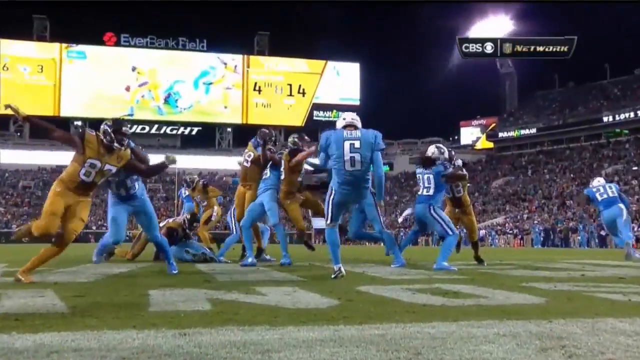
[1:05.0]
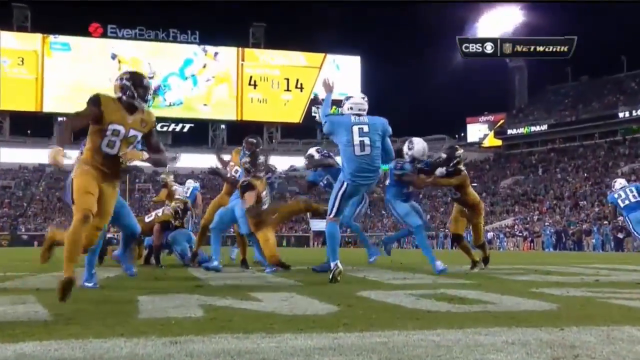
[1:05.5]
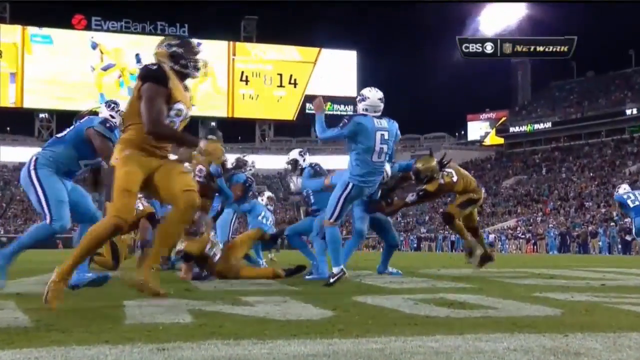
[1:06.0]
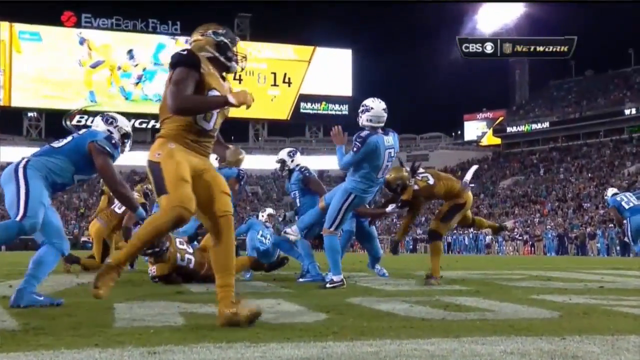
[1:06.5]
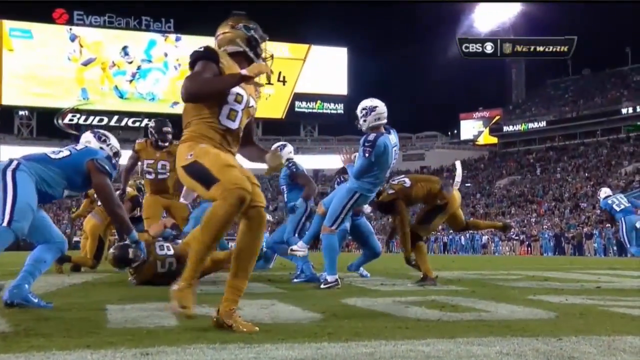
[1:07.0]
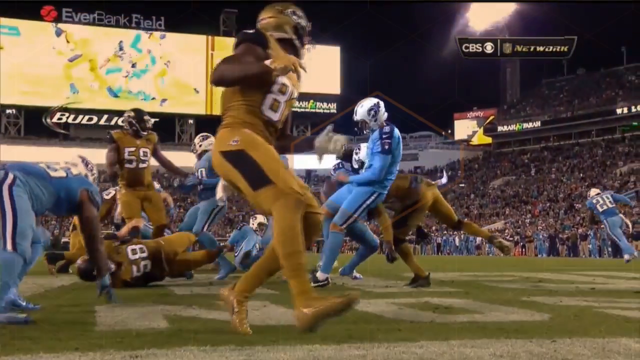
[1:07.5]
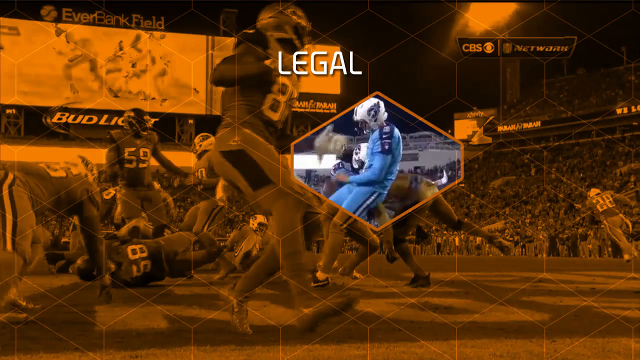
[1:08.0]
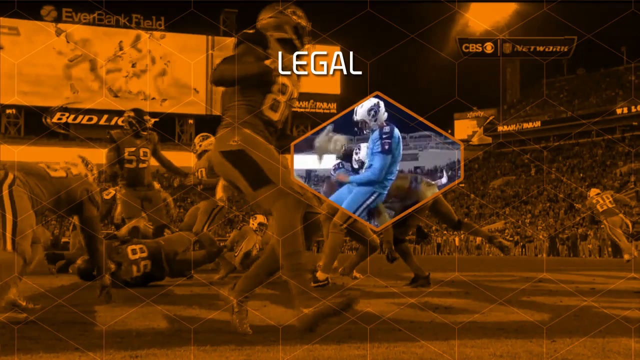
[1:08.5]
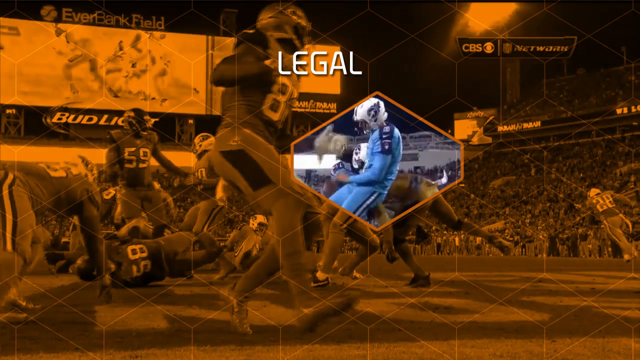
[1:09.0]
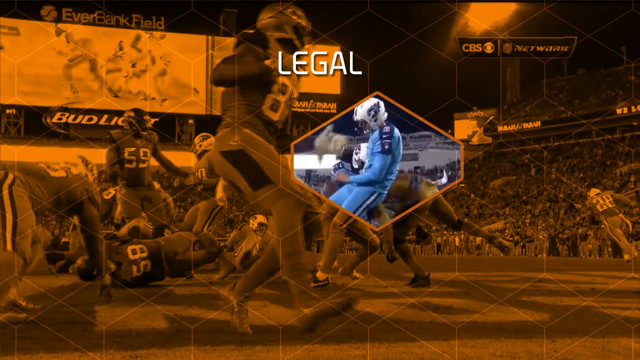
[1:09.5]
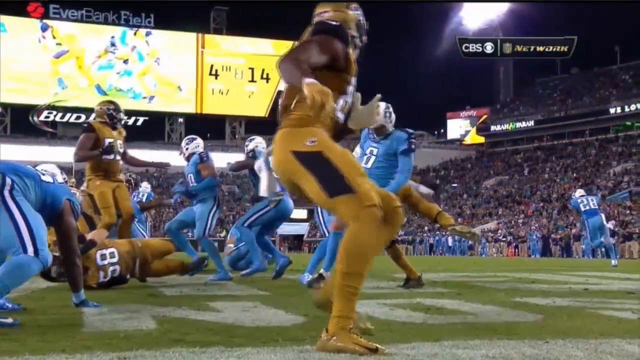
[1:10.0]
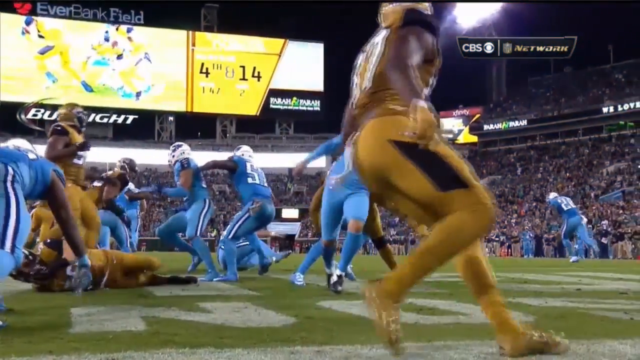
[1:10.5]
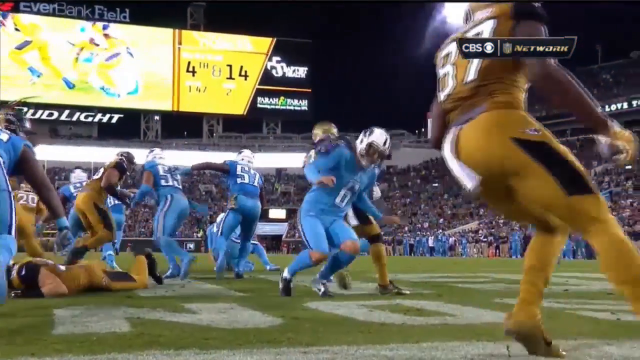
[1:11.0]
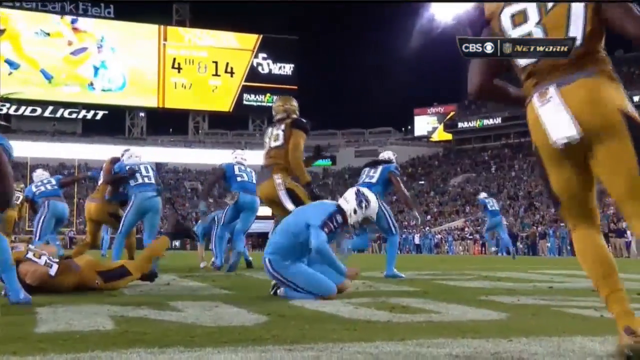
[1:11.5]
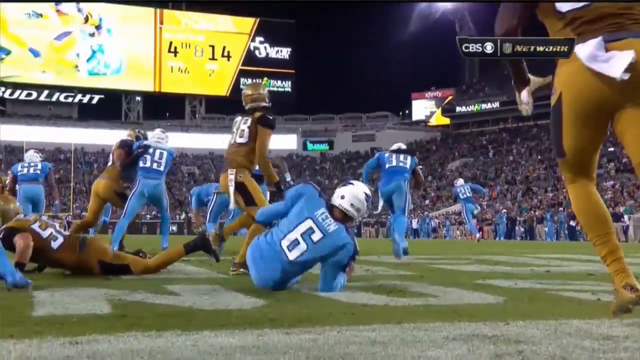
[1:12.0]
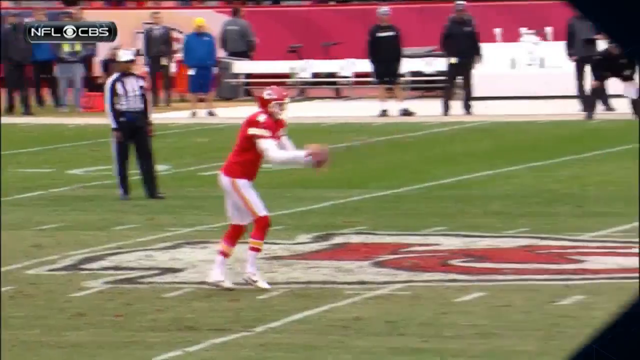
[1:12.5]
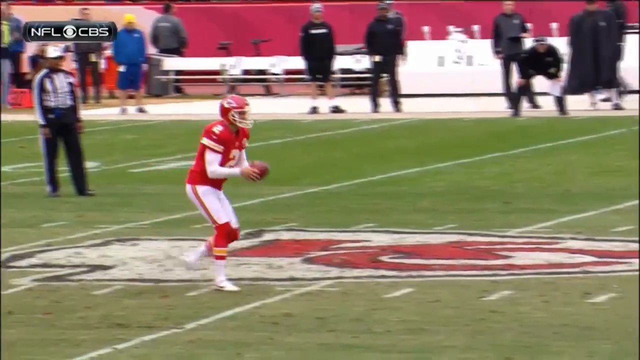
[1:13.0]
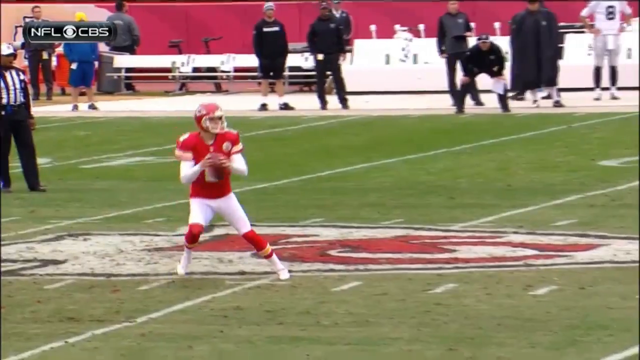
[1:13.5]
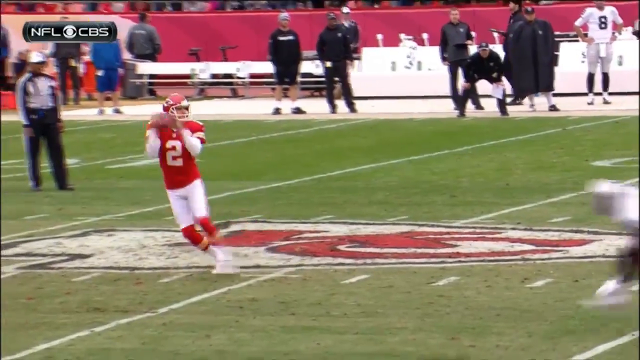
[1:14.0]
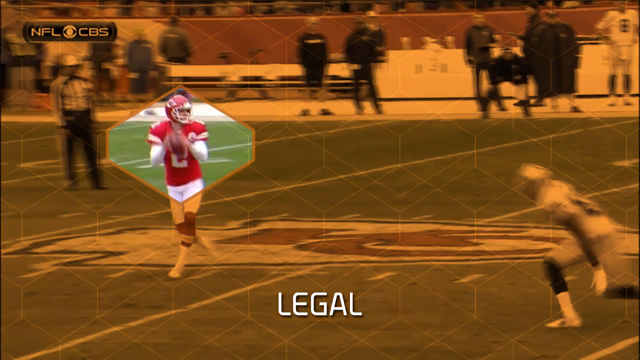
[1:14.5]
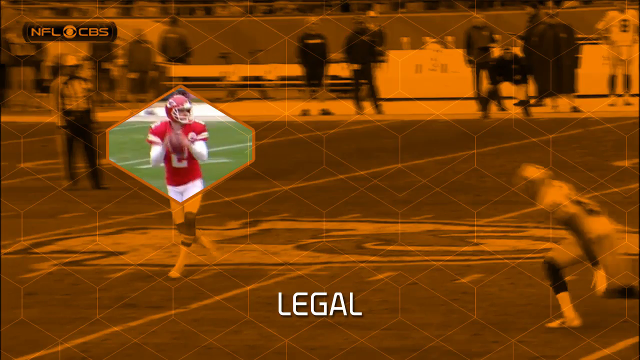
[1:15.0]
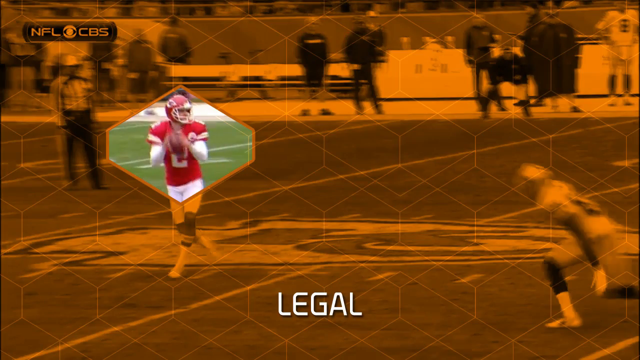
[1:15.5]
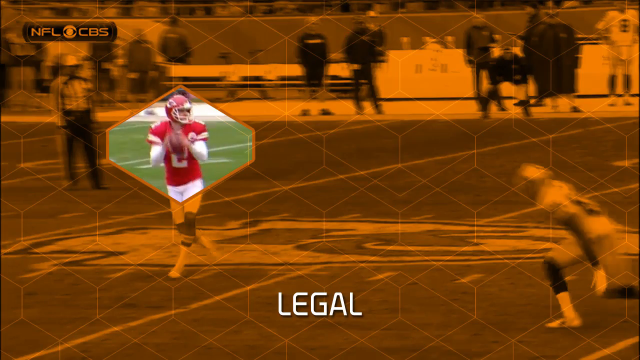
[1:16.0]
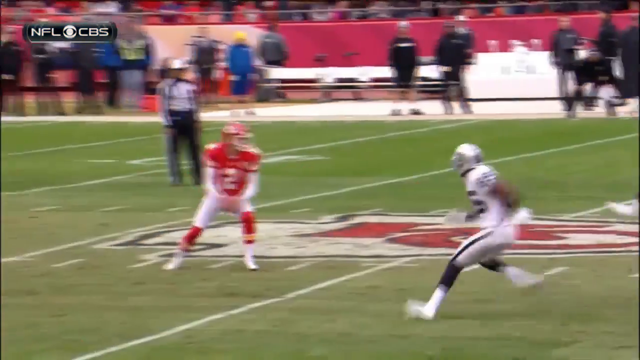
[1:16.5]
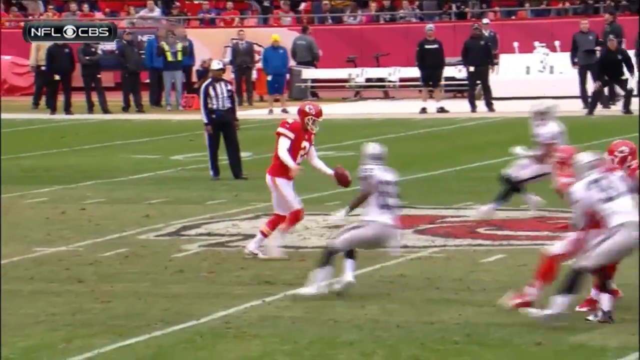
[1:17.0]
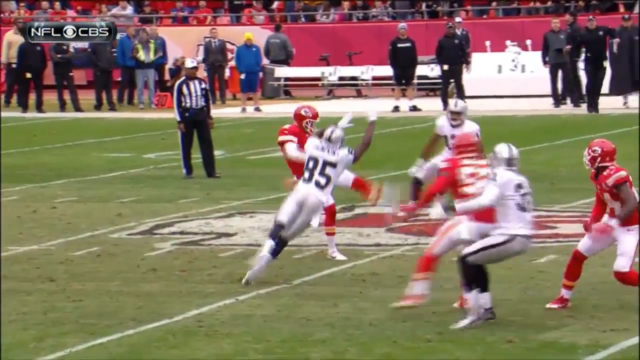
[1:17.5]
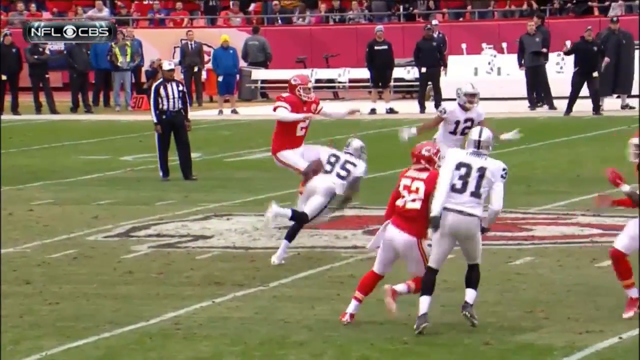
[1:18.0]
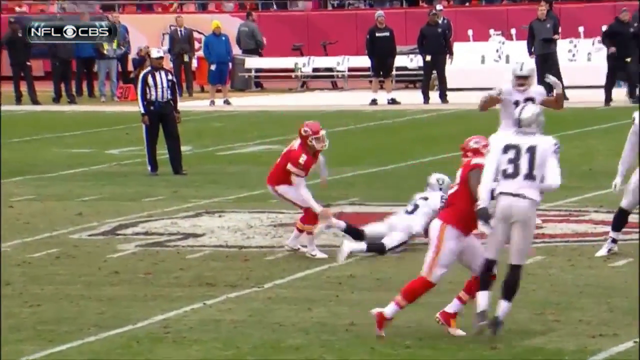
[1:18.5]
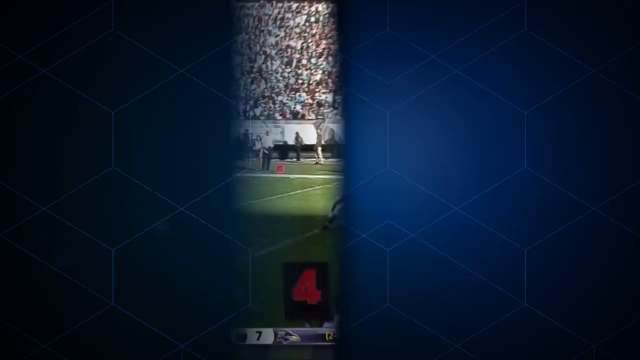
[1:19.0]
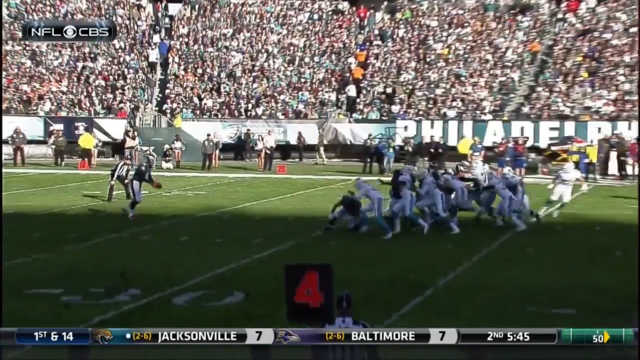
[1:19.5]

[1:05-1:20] Seen from a back view, the Titans punter in his own end zone punts the ball away. Someone kind of comes in and sort of contacts him, above the waist and well after he got the ball out; it looks like incidental contact, as if he got walked into him, though it is hard to see. The orange background pops up with a little triangle over the contact point, this time saying "legal." Next is a Chiefs play: the punter is standing on the Chiefs logo at about the 50-yard line, catches the ball, and fakes like he is going to throw it, taking a couple of steps back with the ball in his hands. The orange background pops up with a little diamond over him holding the ball, like a quarterback dropping back, and says "legal." He then kind of bails out of throwing and drop kicks the ball as a Raiders player tries to hit him; the Raiders player does hit him. The video then flips to a play that looks like it is in the Eagles stadium, with an Eagles punter about to punt.